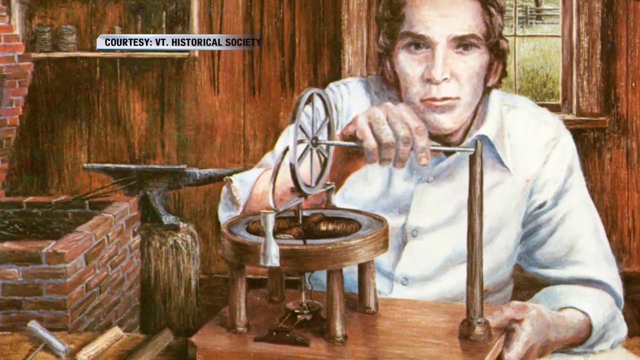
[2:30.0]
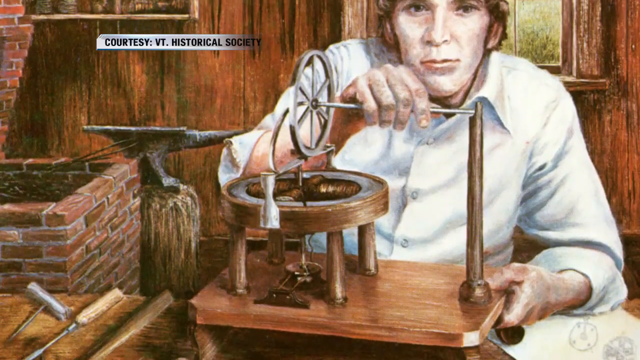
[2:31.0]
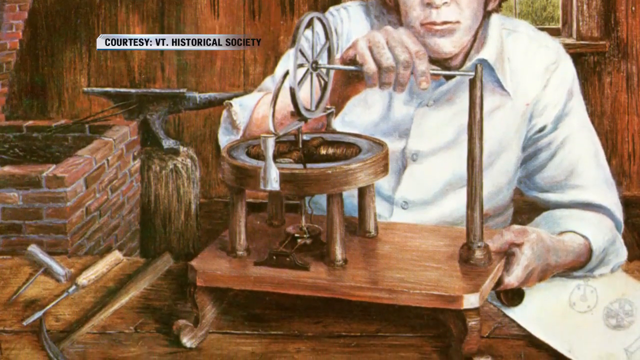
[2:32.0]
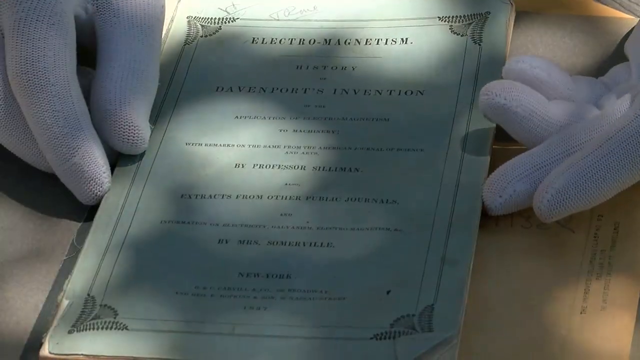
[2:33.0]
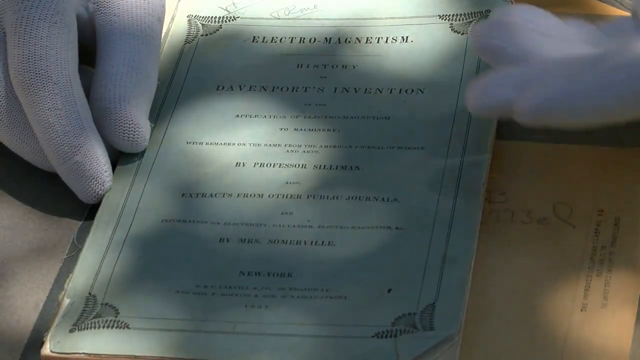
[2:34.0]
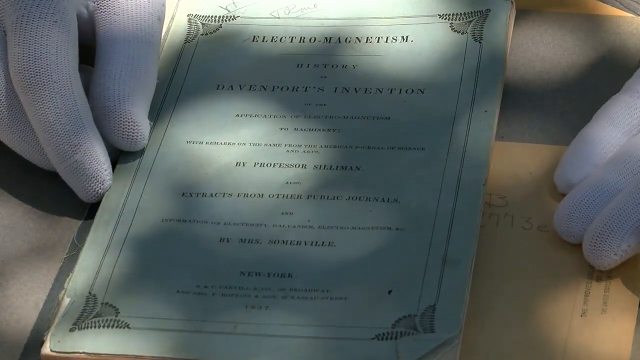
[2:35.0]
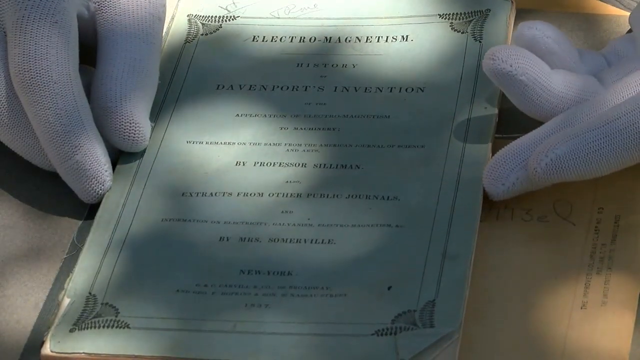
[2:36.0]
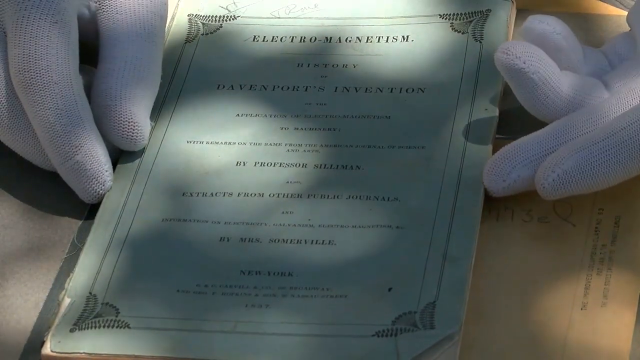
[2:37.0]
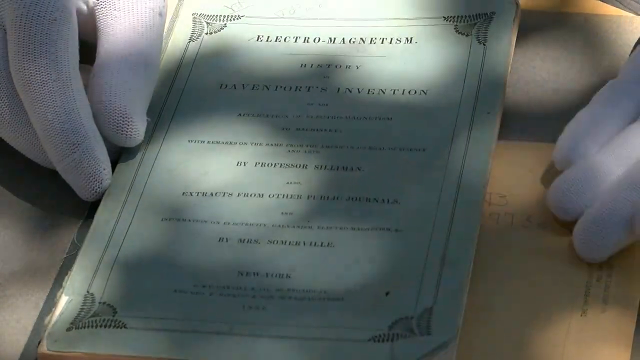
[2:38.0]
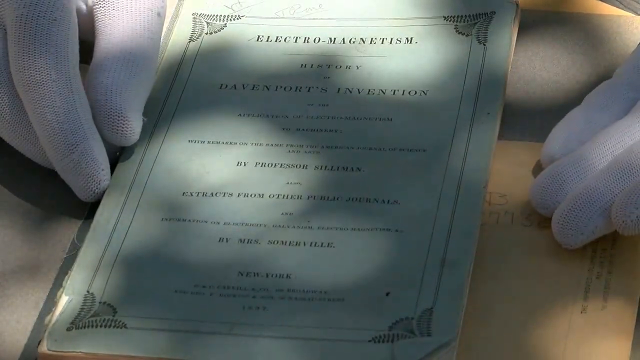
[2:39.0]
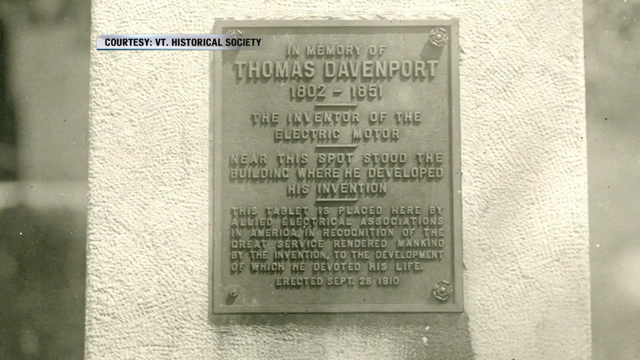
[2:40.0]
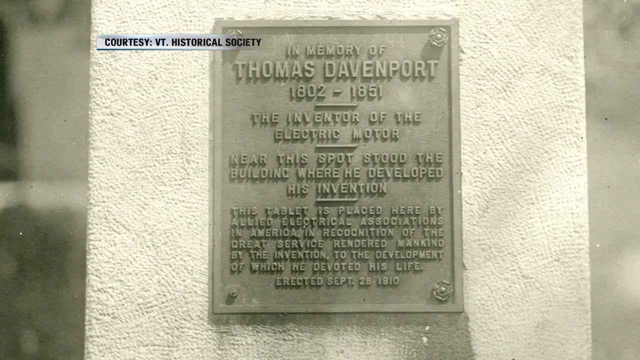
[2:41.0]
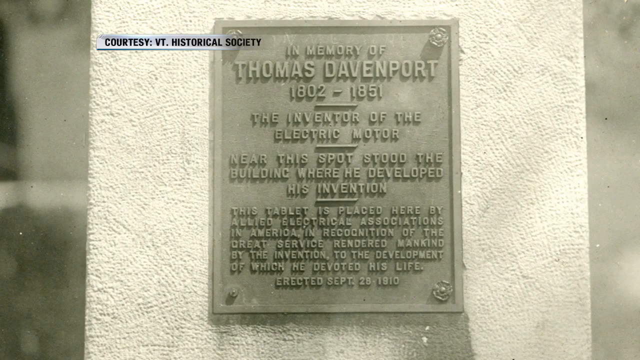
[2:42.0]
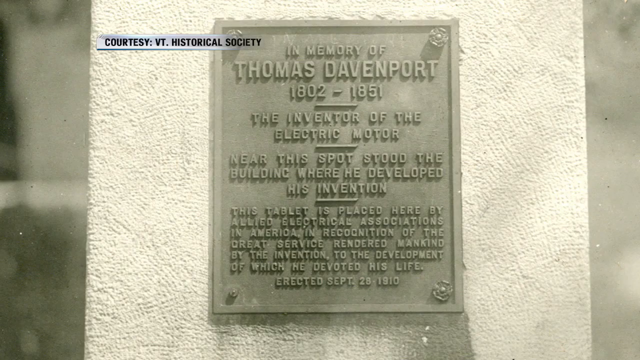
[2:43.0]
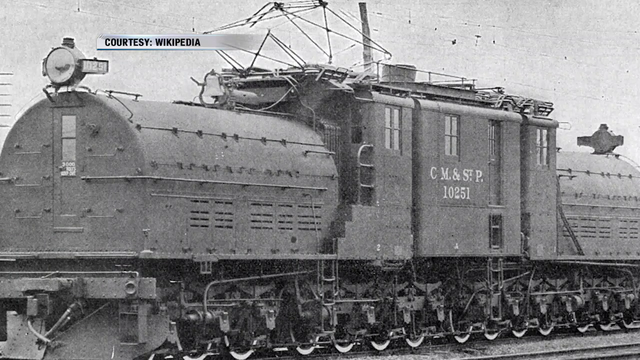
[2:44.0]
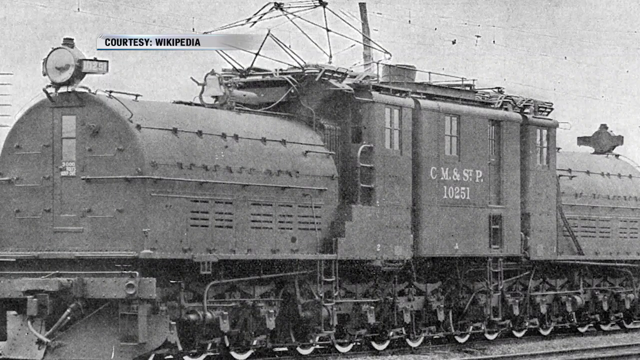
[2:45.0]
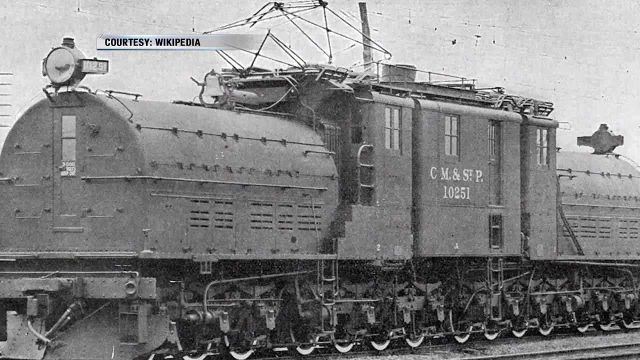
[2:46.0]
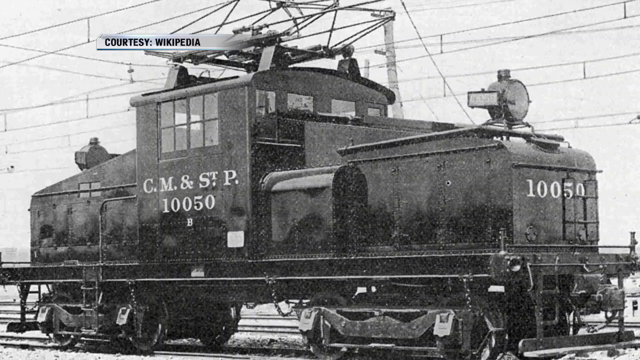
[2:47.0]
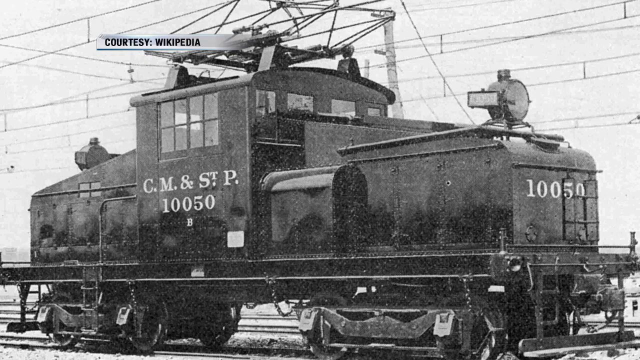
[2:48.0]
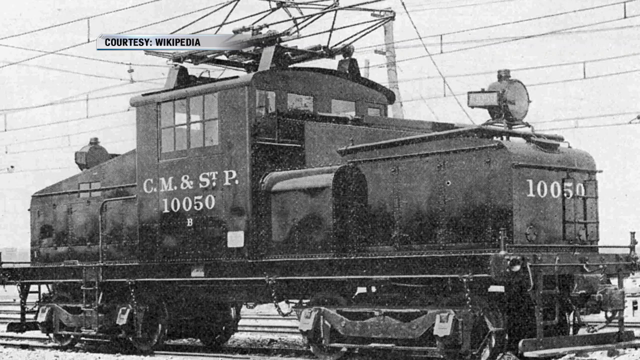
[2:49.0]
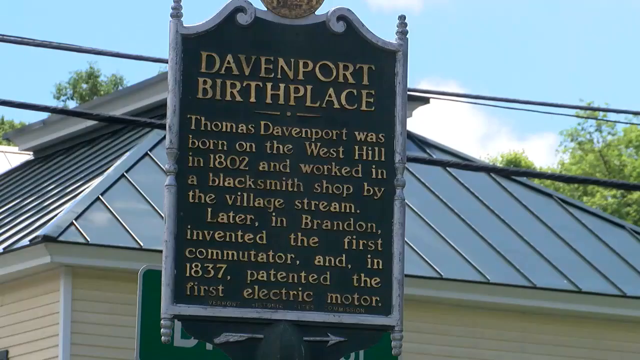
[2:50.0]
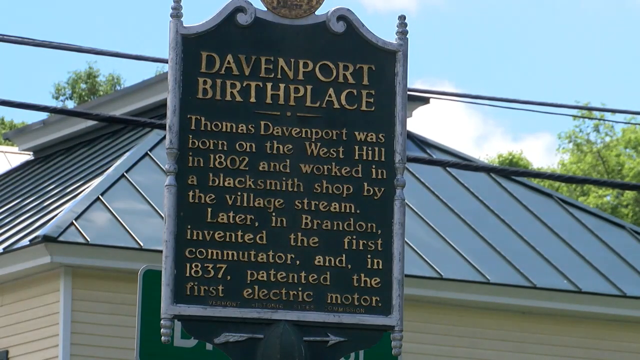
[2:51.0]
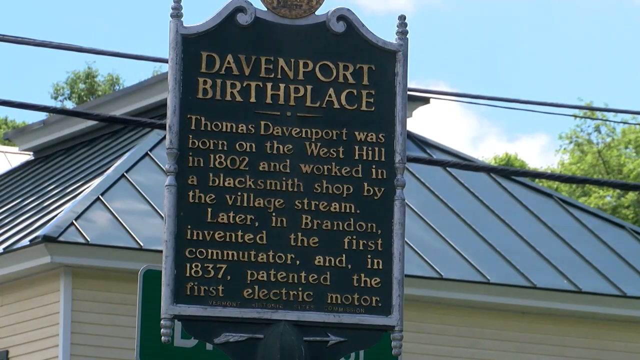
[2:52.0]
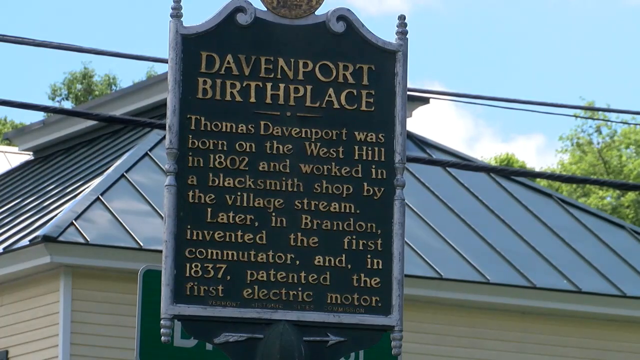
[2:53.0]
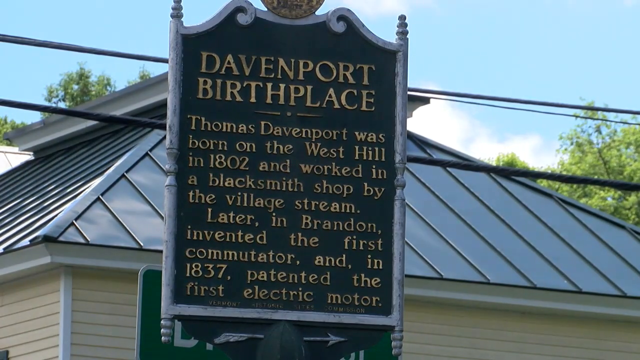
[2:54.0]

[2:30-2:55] A colored drawing shows a man holding a lever attached to a wheel that seems to be attached to an electromagnet, while with his left hand he holds the bottom of the plate the electromagnet is attached to. On the left side there is something like brakes. The camera pans down, and the video cuts to a completely different image of something like a notebook with the title "electromagnetism" at the top. Two hands in white gloves are on each side; the hand on the right moves back and forth, as if the person is talking with their hands, and they lift the paper up a little before it goes back down. The video then cuts to a black-and-white image of what looks like a monument with a plate on it reading "in the memory of Thomas Davenport" and the dates "1802 to 1851".